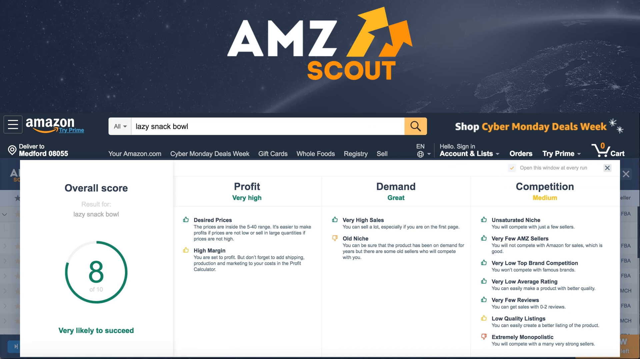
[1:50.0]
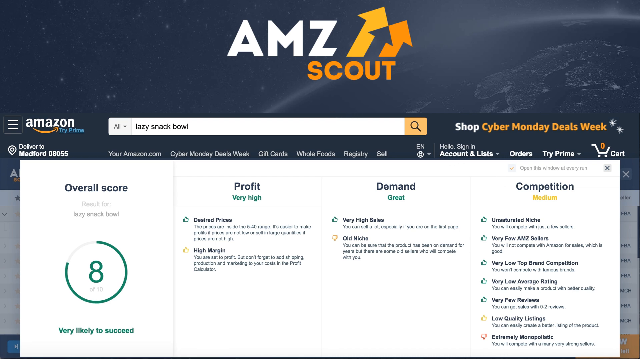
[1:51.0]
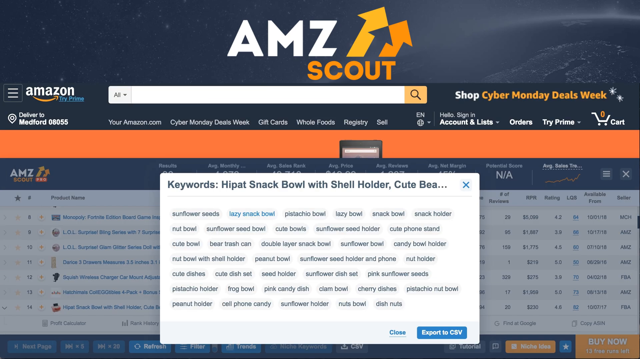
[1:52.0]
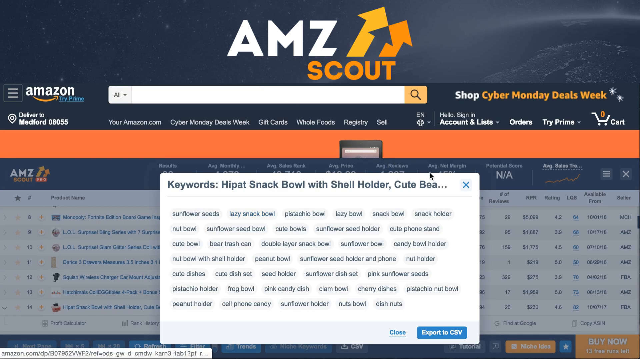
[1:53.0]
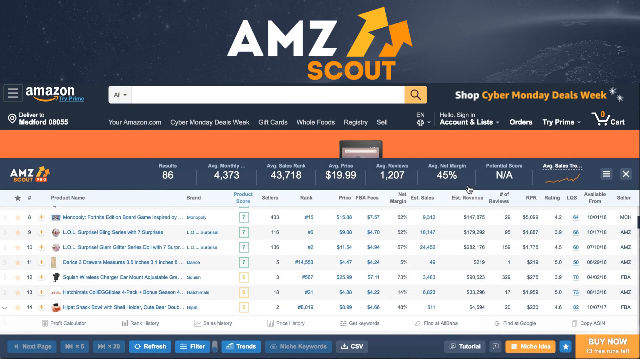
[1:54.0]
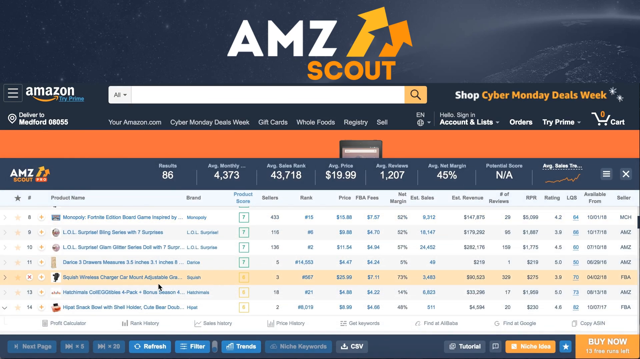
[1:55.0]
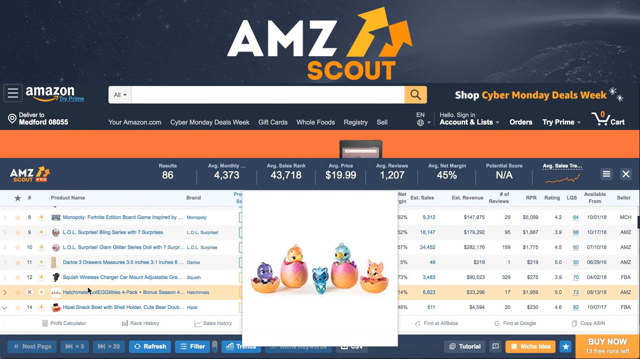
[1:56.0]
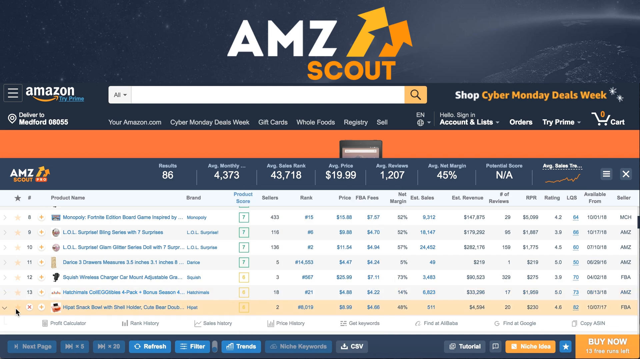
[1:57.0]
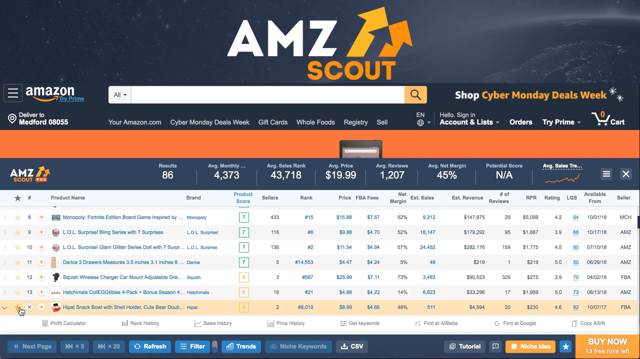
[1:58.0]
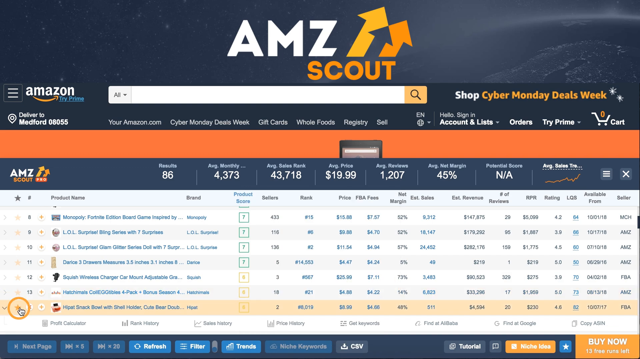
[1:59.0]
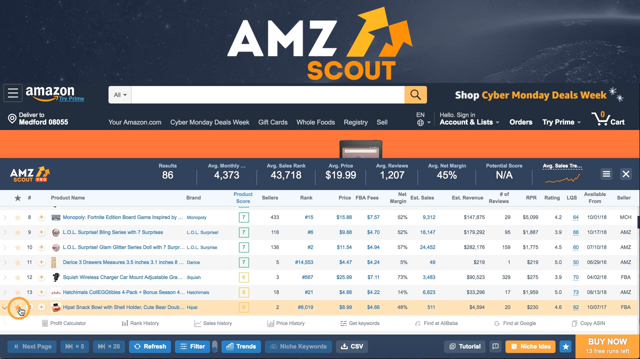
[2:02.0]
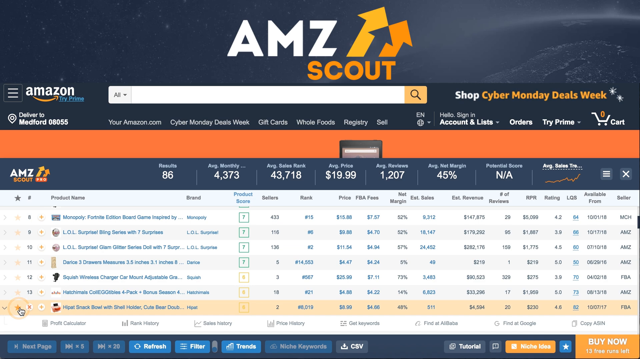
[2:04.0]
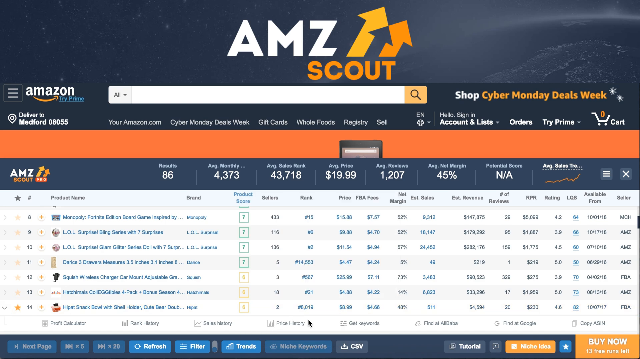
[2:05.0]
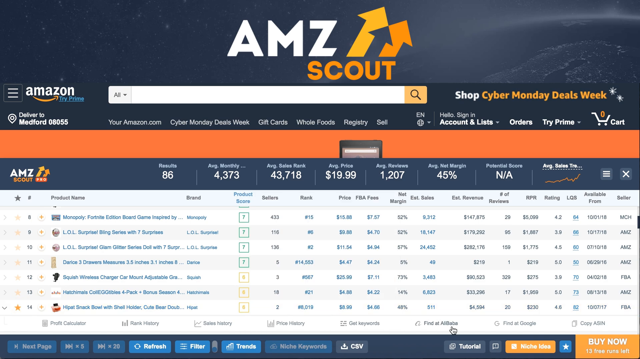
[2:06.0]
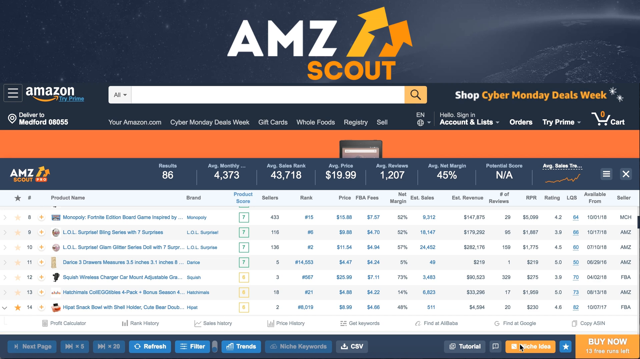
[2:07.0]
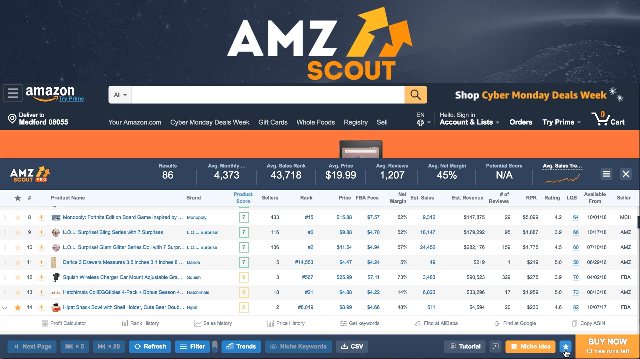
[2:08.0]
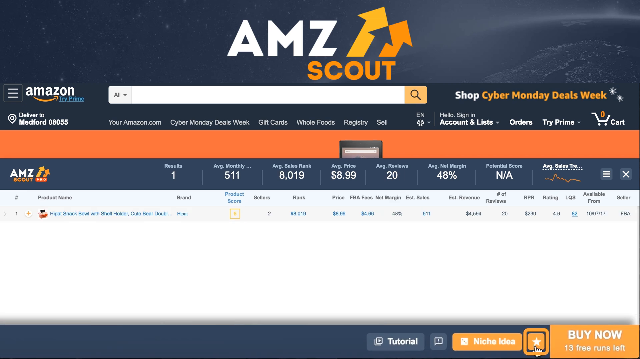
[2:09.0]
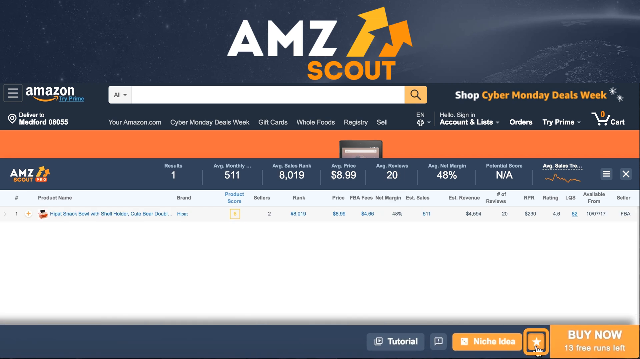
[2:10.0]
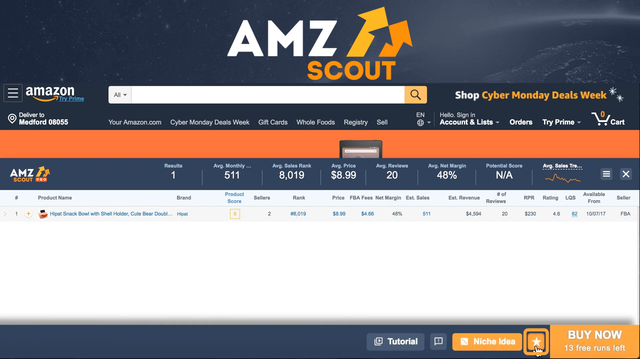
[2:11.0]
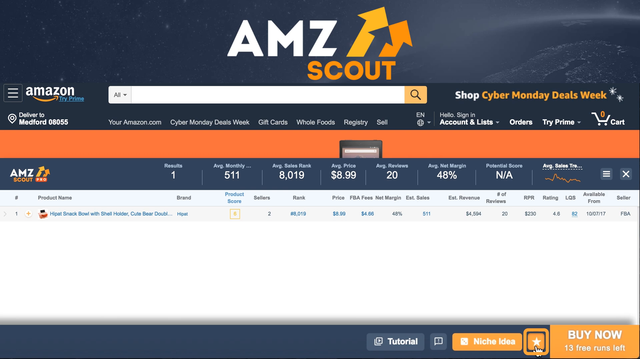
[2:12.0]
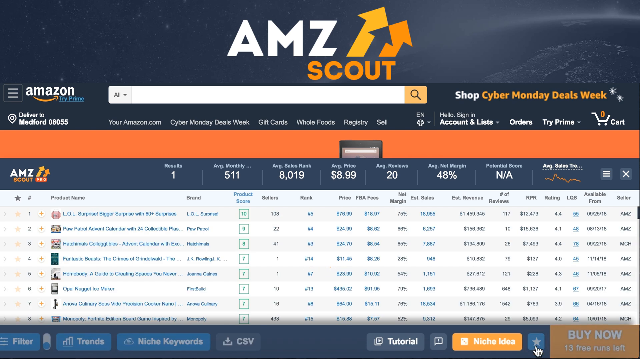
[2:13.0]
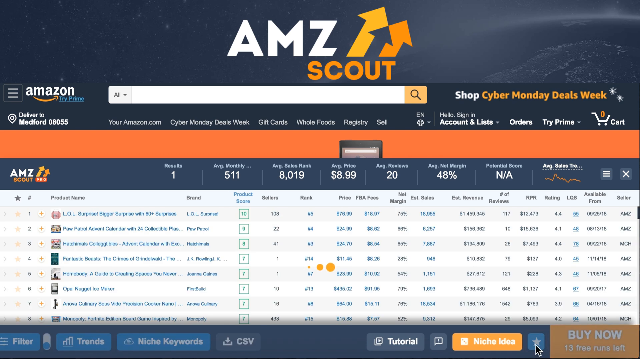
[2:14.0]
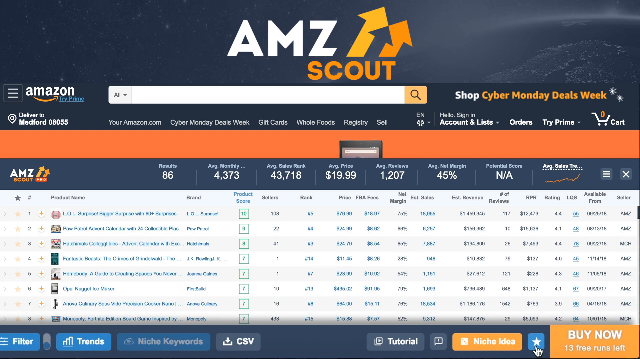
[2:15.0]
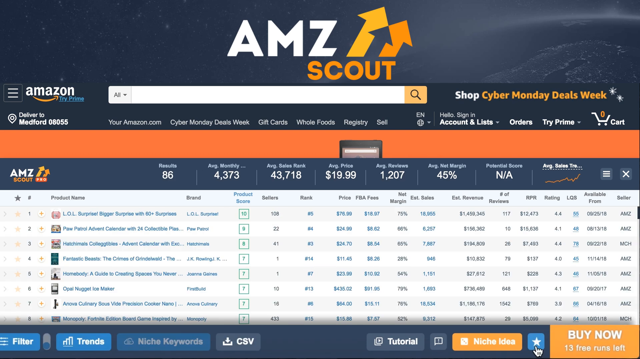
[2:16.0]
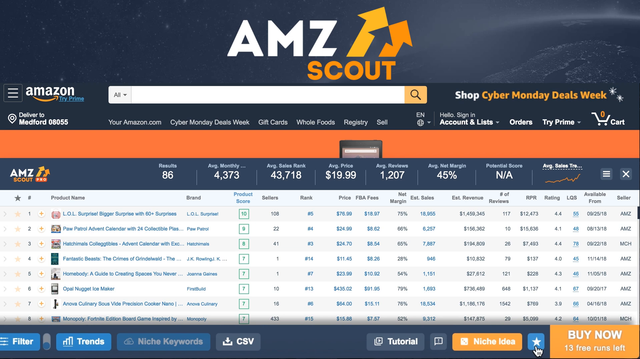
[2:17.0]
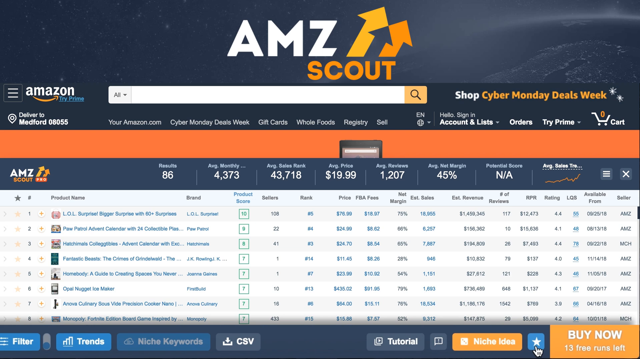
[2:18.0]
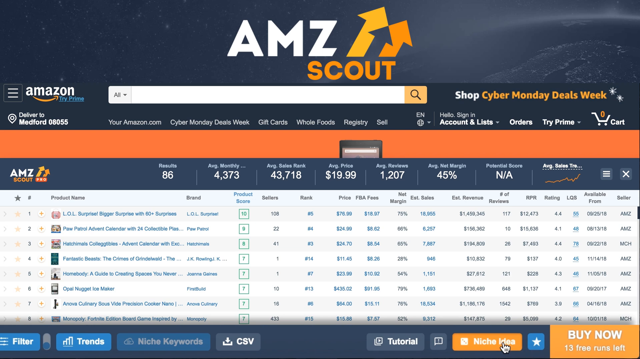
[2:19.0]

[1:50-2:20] The page with the overall score, profit, demand and competition columns is shown: the overall score is 8 of 10, profit is very high, demand is great and competition is medium. The view goes back to the keyword page, that page is closed, and the star rating for the snack bowl is selected. At the bottom of the page a menu appears reading "Tutorial" and "Niche Ideas", with a star and a "Buy Now" button. The "Buy Now" button is highlighted and ellipses appear to show it is working. Niche Ideas is then selected, and overall score, profit, demand and competition appear.